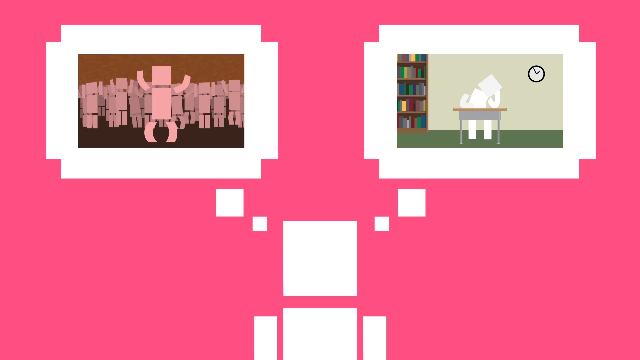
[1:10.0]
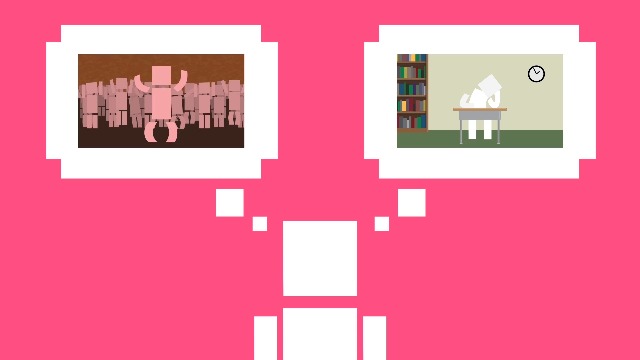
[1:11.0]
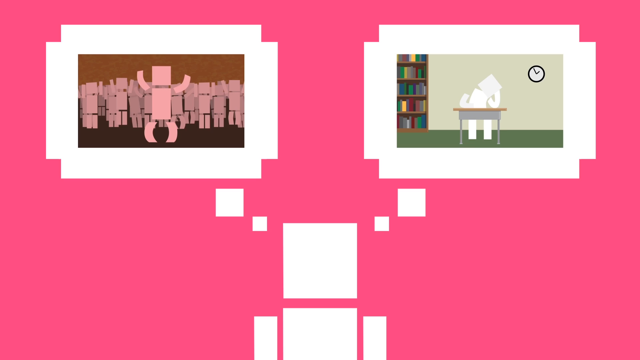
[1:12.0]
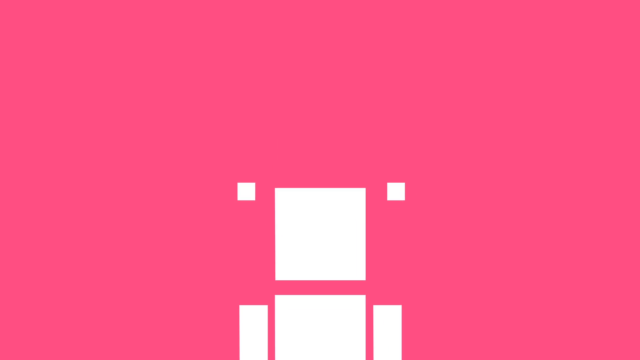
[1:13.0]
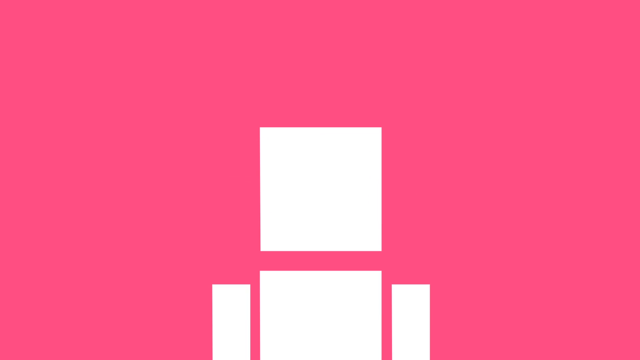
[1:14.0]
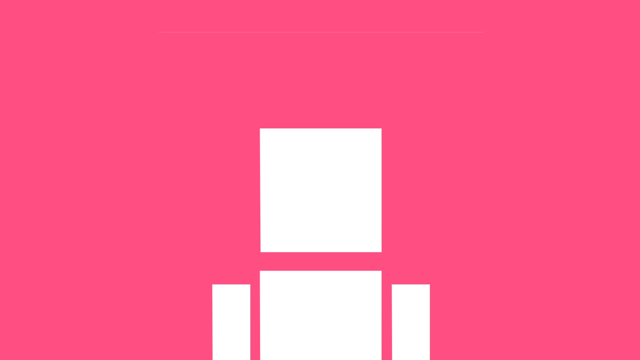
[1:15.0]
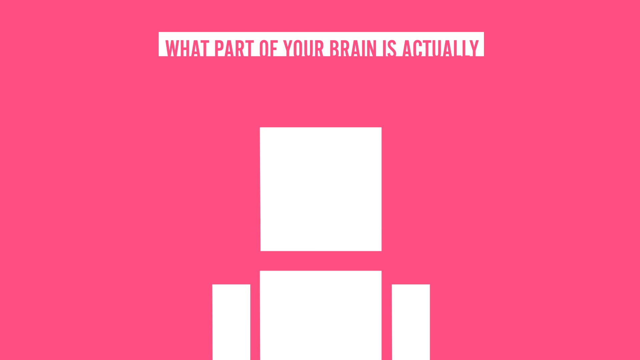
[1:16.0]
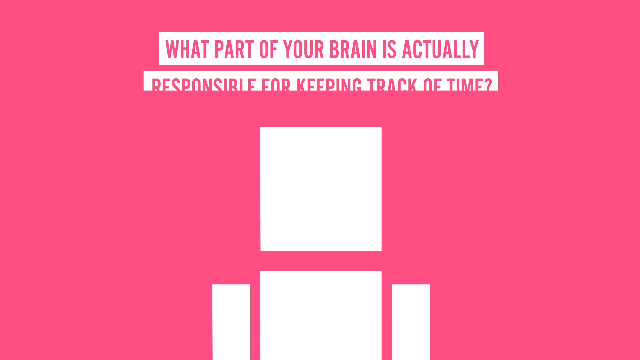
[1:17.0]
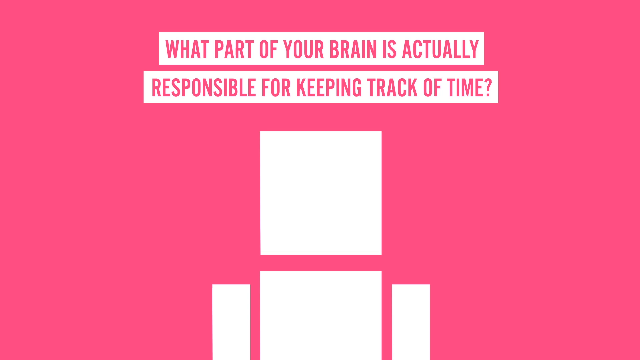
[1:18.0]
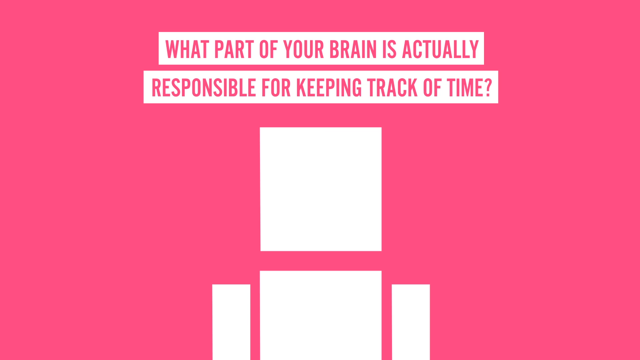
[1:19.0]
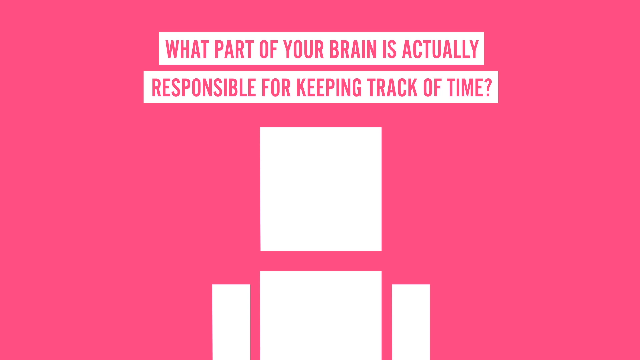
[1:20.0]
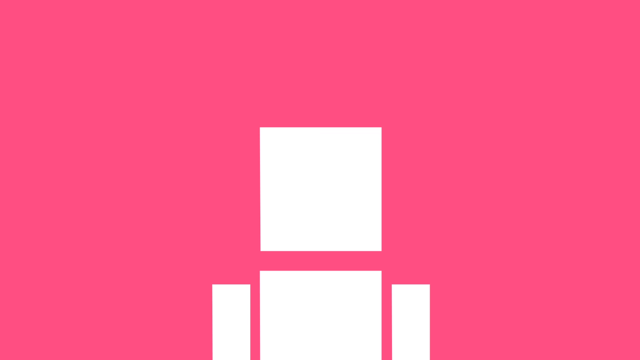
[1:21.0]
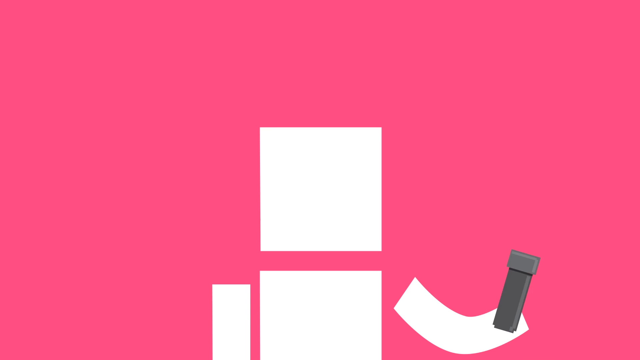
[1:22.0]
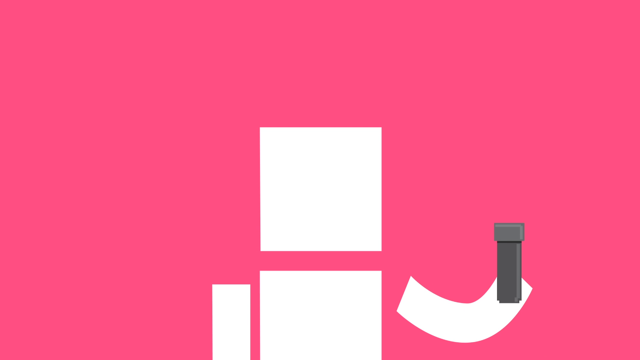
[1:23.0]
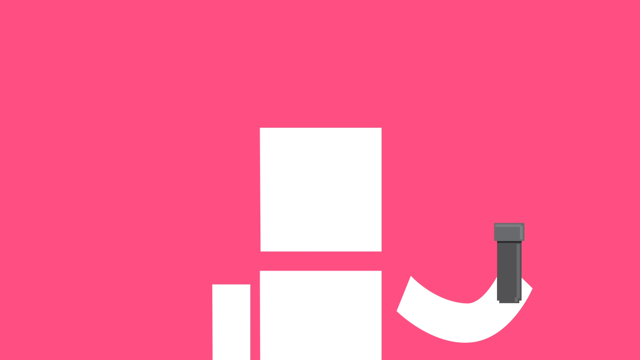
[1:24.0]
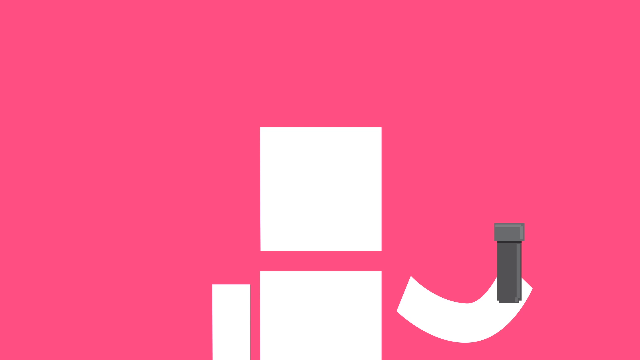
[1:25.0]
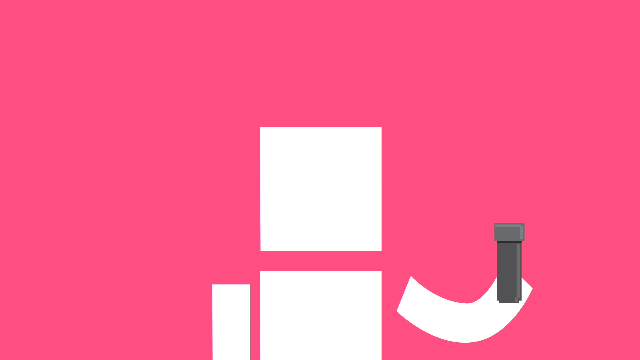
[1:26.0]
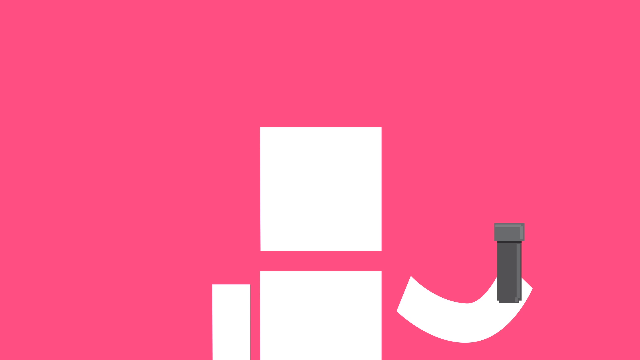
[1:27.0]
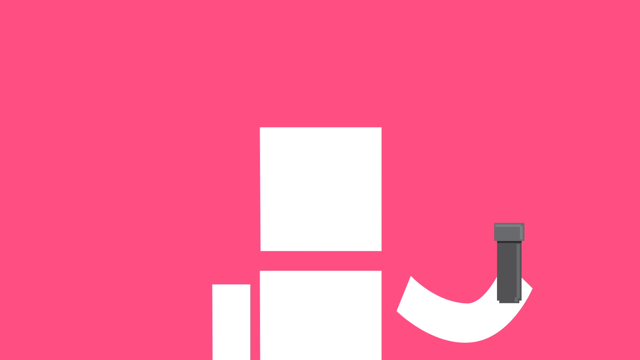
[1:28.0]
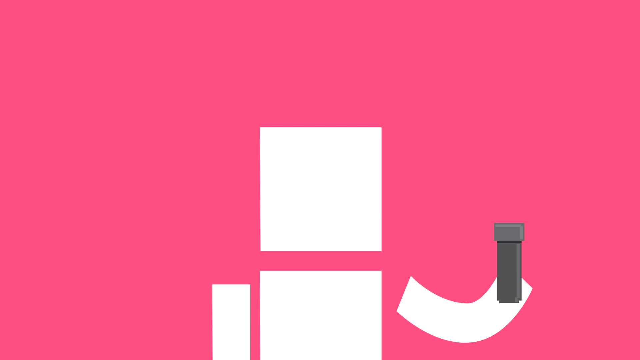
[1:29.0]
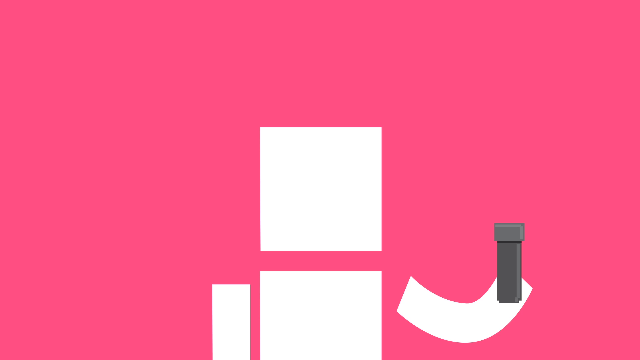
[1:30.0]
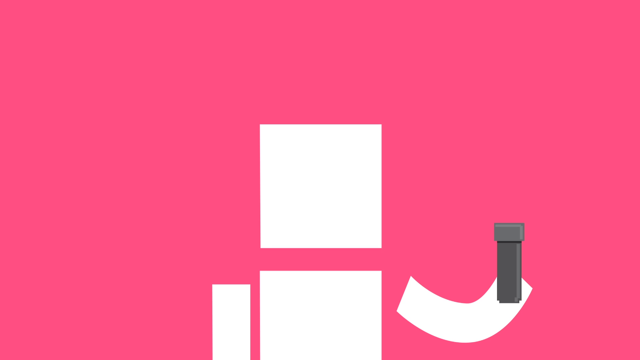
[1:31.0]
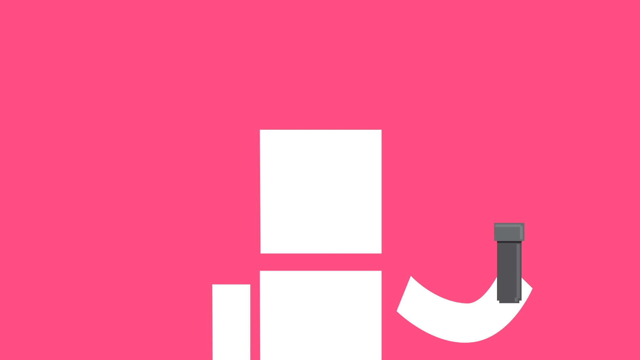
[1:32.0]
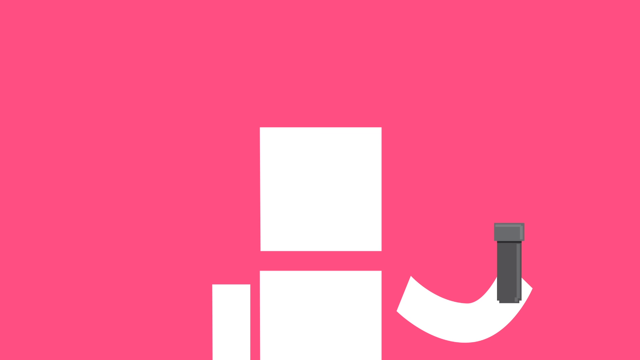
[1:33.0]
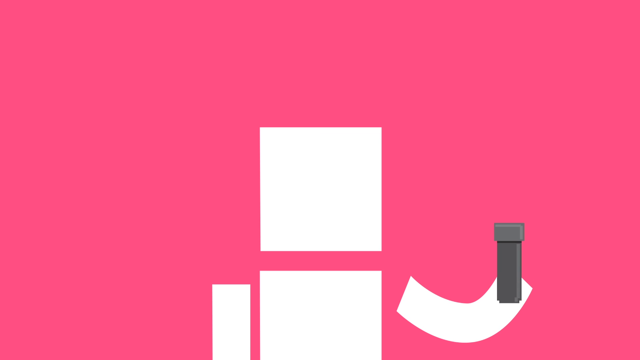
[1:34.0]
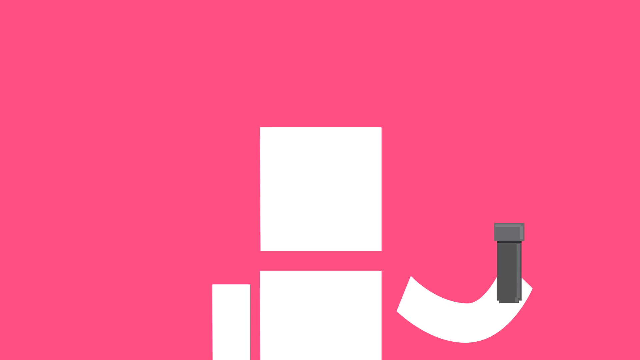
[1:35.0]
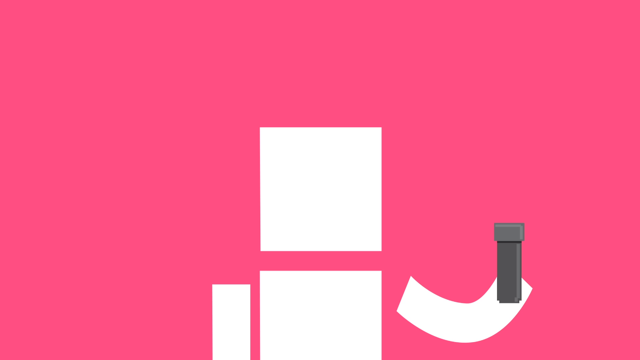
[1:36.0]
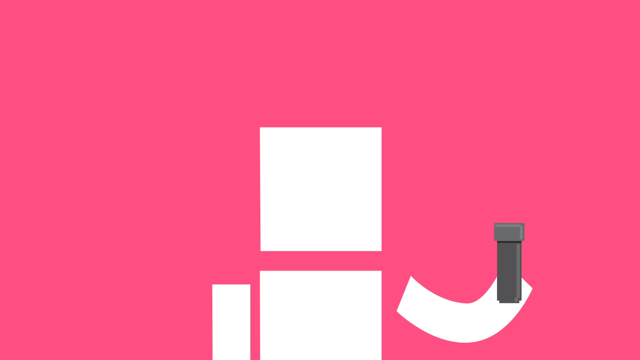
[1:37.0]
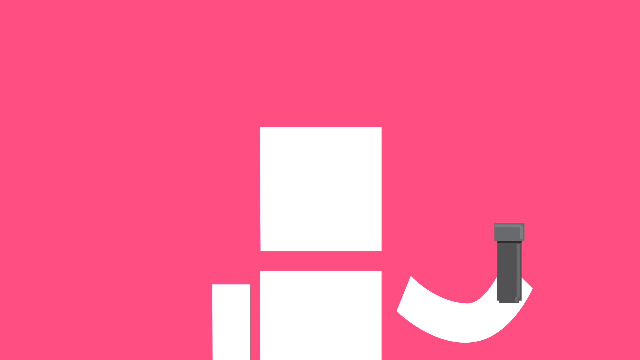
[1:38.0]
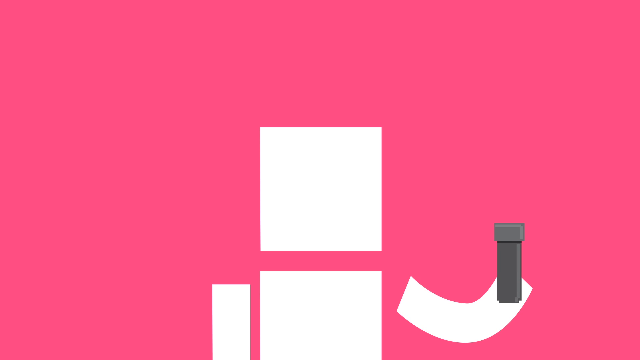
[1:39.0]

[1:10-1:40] Both thought bubbles hover around the blockhead character in the center: the party scene on the left and the tired study session on the right. The thought bubbles disappear, shrinking back into the blockhead's head, and the view becomes a head-and-shoulders shot. A graphic rolls down slowly in the upper third of the screen, reddish-pink sans serif block text on a white band, reading "what part of your brain is actually responsible for keeping track of time?" The blockhead's head bobs up and down rhythmically. He appears to raise some instrument, perhaps a flashlight, with his left arm. He flashes it once, and a medium-wide yellow beam momentarily comes on, then rapidly goes off. He flashes it another time.